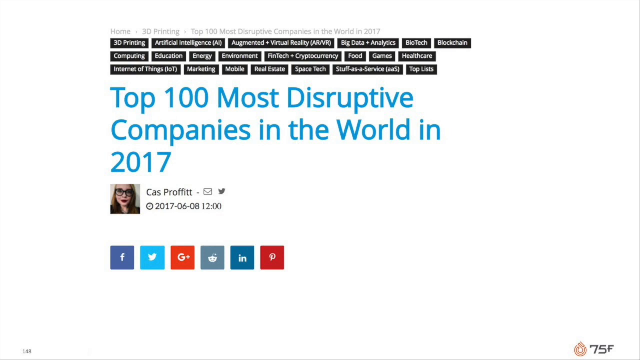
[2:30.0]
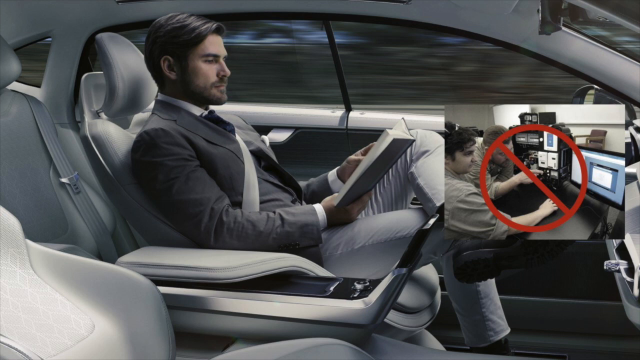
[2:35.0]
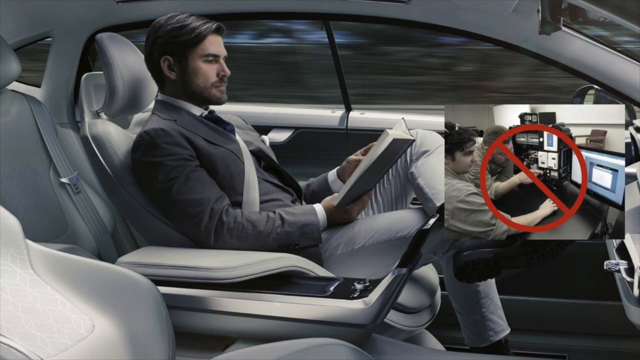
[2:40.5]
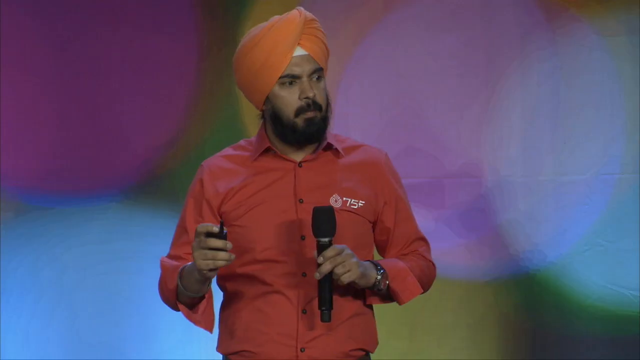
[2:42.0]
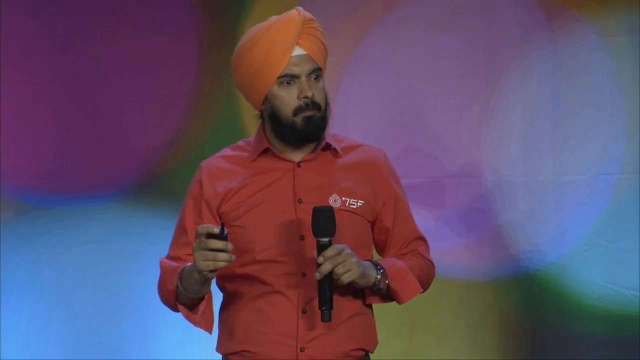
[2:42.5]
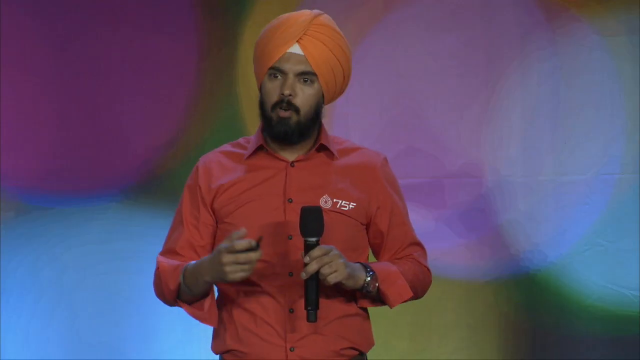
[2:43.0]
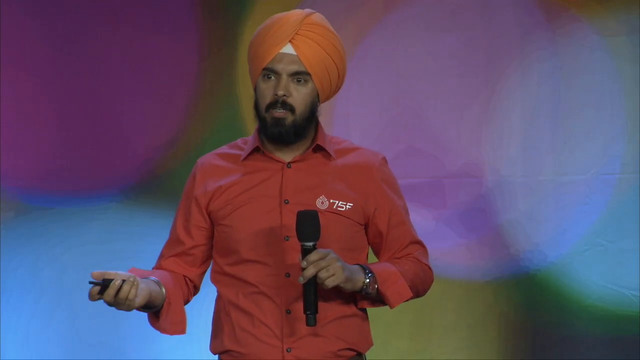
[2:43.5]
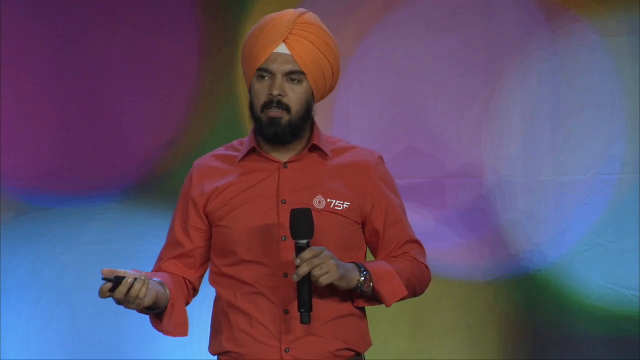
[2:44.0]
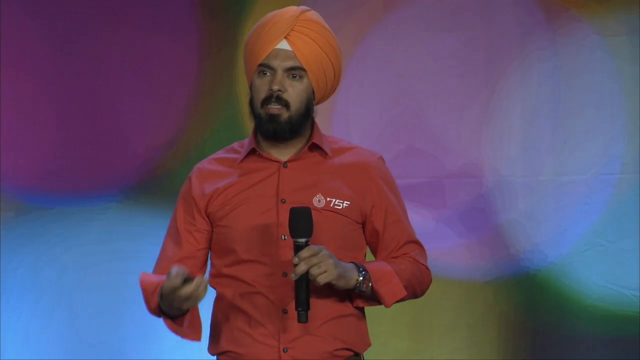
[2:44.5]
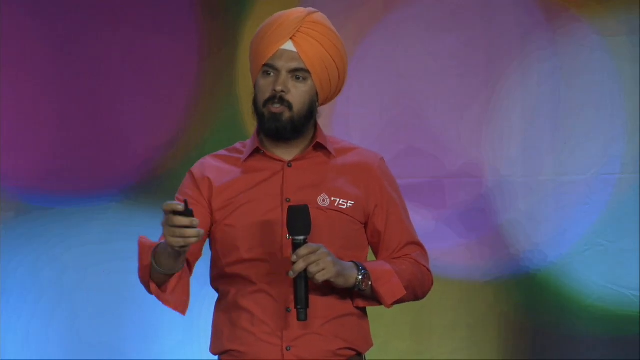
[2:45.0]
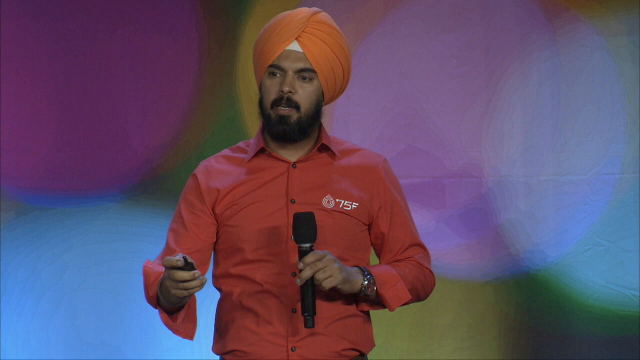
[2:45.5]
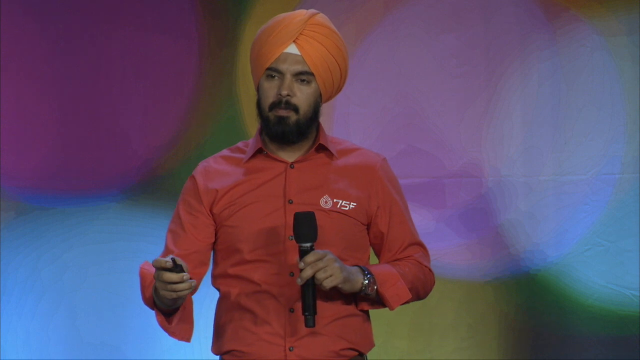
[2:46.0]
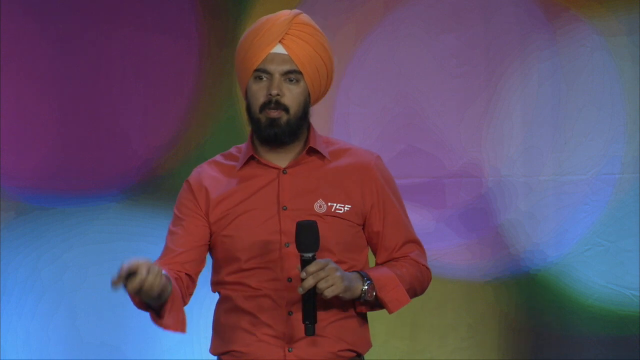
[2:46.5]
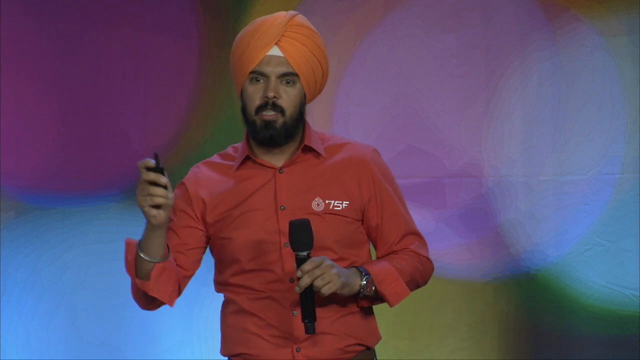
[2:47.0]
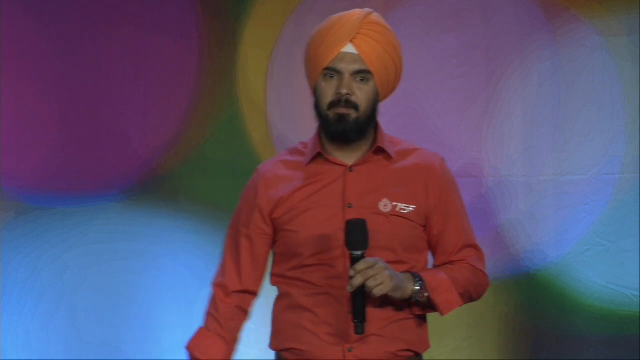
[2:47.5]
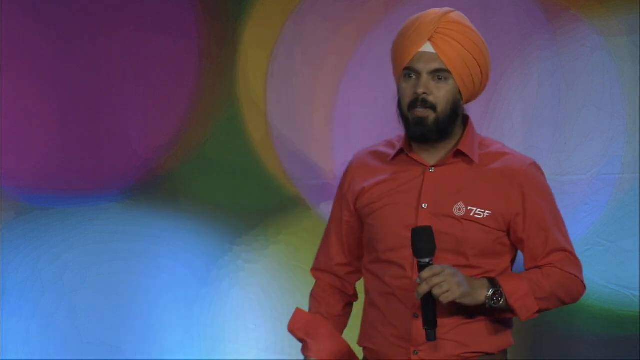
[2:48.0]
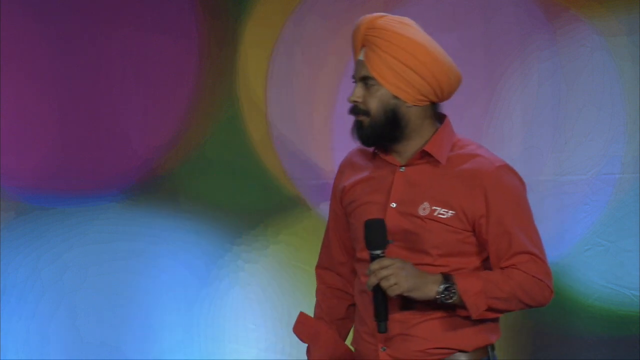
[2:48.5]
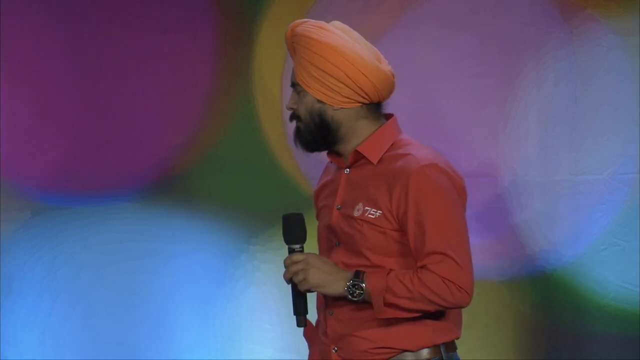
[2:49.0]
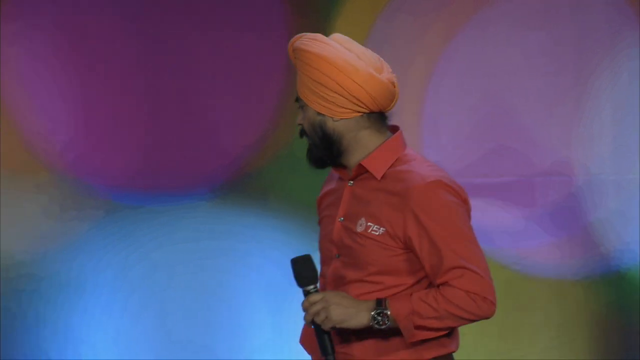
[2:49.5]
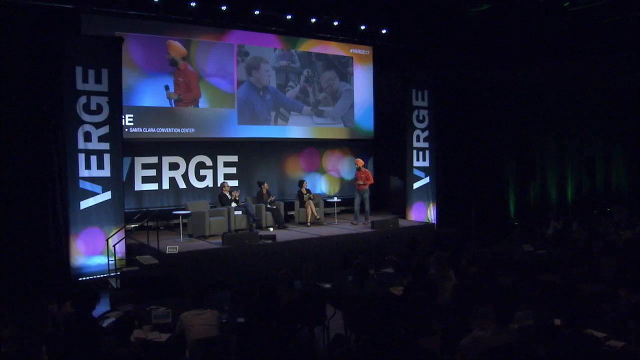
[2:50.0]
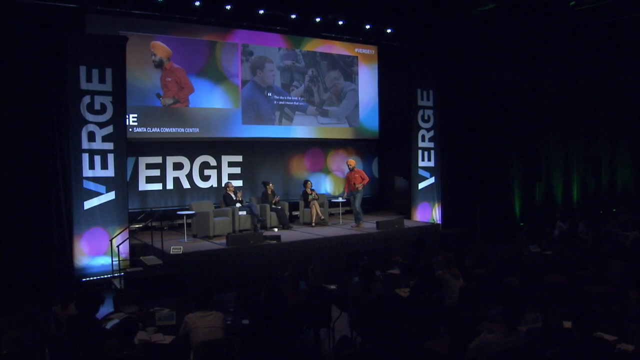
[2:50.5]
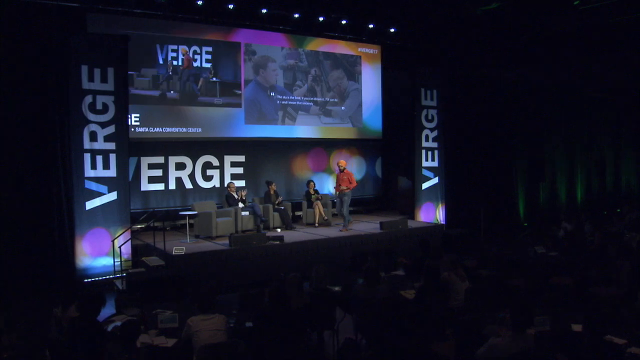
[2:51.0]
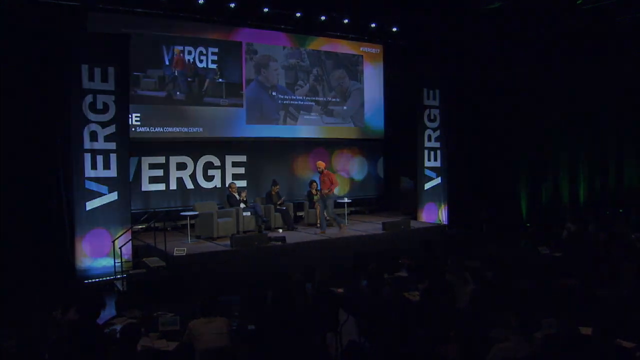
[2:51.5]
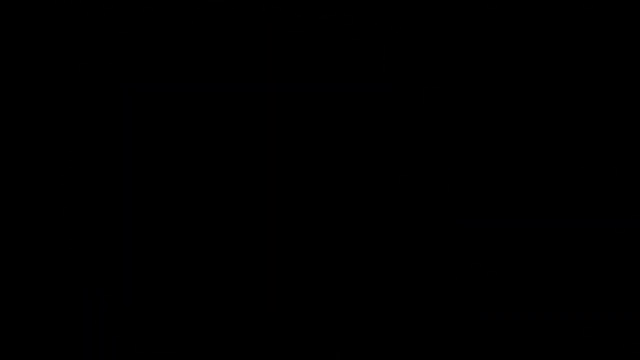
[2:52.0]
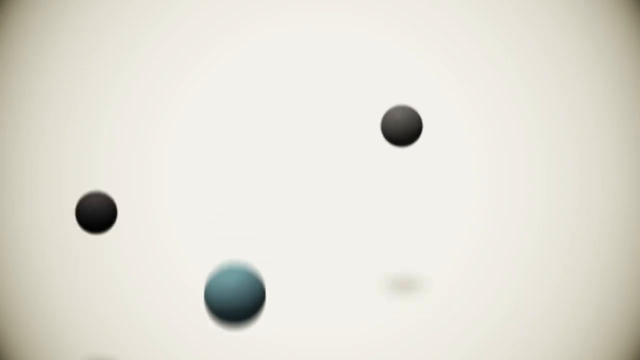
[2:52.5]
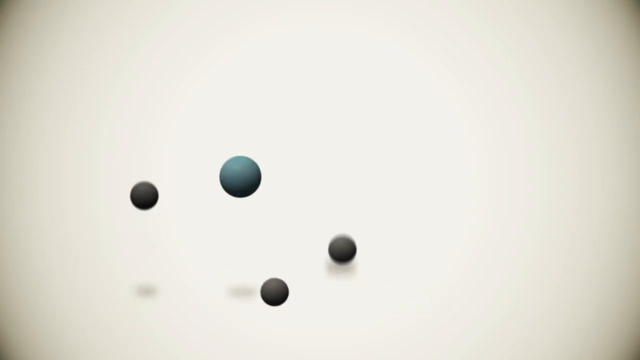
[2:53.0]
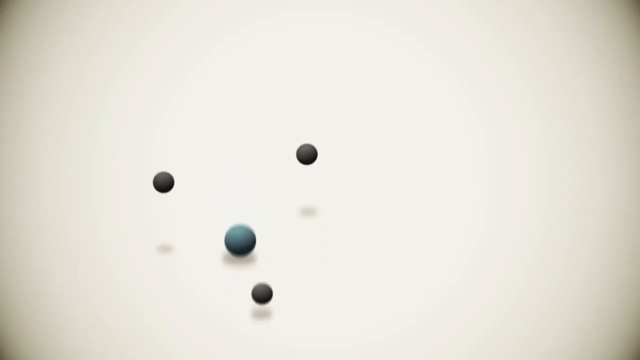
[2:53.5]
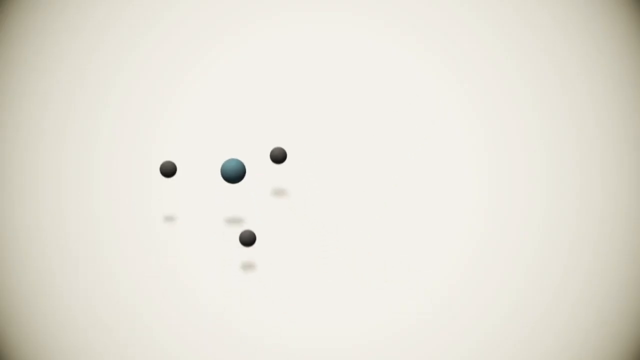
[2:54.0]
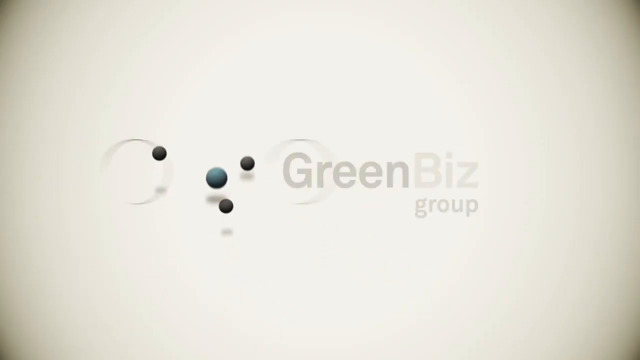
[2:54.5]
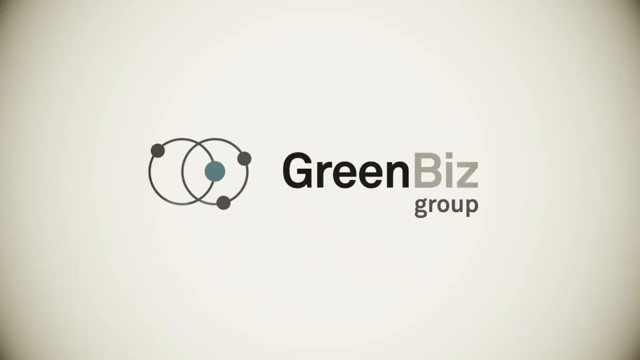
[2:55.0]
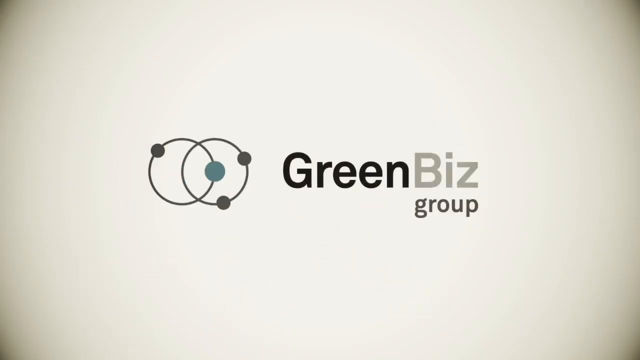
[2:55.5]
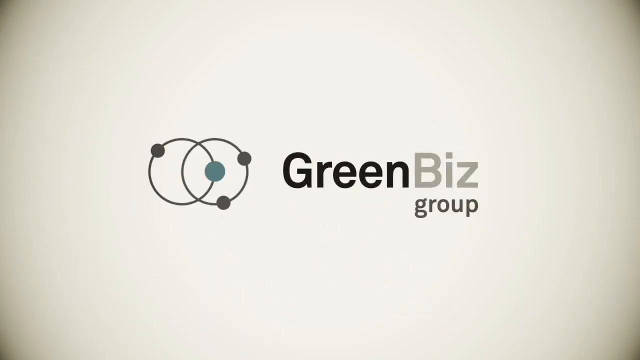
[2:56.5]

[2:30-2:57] A slide shows the words "top 100 most disruptive companies in the world in 2017" in blue writing, a small image of a woman with "Cas Profitt" written next to her, and the date "8th of June 2017". The next image shows a man in a vehicle that appears to be automated, relaxing in the front driver's seat and reading a book as the car travels. The screen switches to the speaker, a South Asian man with an orange turban and red shirt, holding a black microphone in his left hand and a slide clicker in his right and talking to the audience. He gesticulates with his right hand, stops, appears to say thank you, steps back, looks around the room and turns to the three other people on stage. The camera switches to a view of the whole stage as he walks over to his chair and sits down. The screen then changes to a grey-white background with computer-animated balls bouncing on a floor away from the camera, and the writing "Green Biz Group" appears.